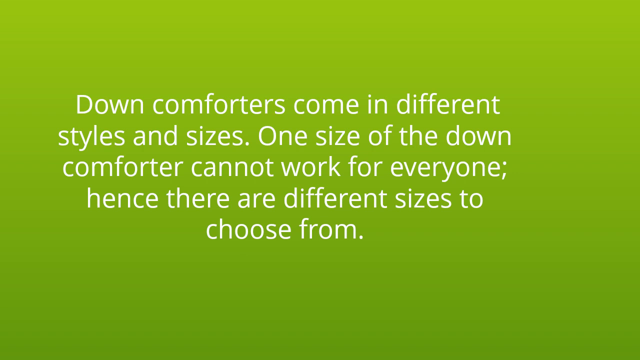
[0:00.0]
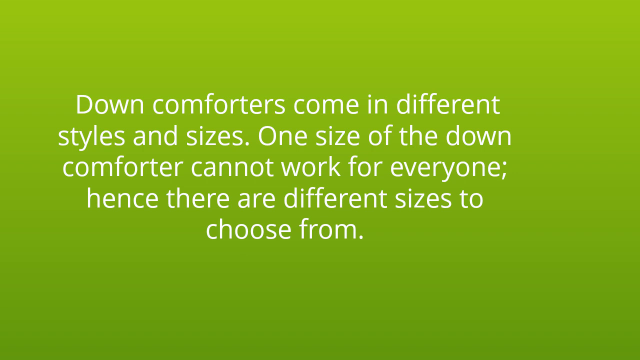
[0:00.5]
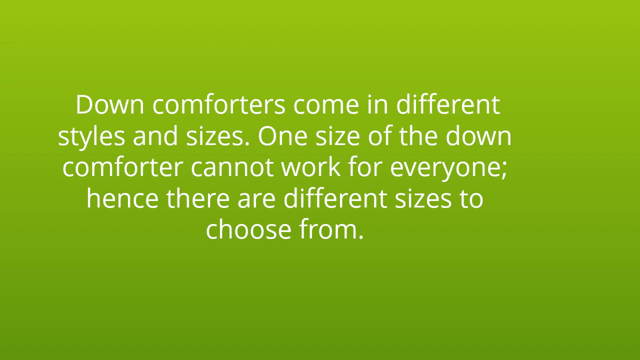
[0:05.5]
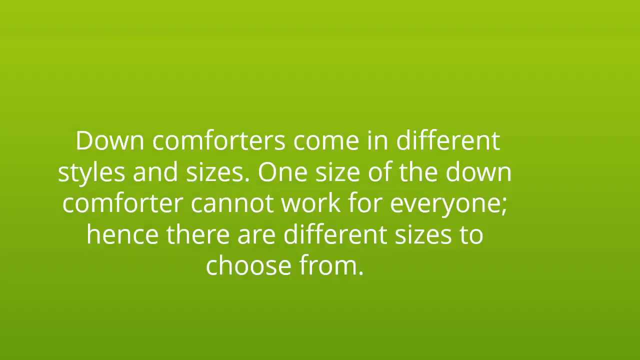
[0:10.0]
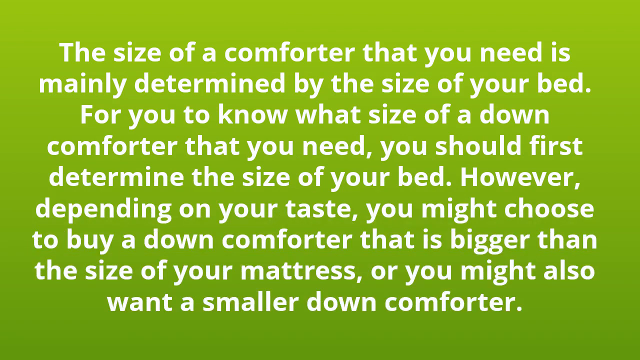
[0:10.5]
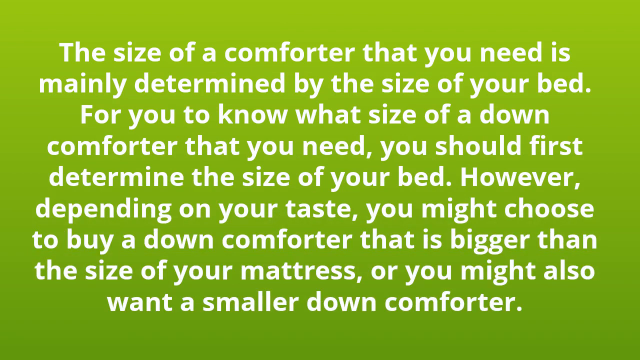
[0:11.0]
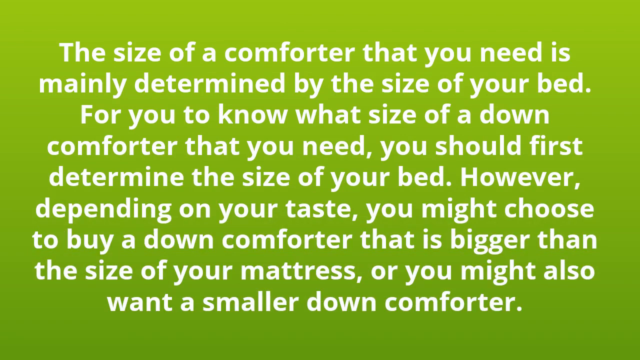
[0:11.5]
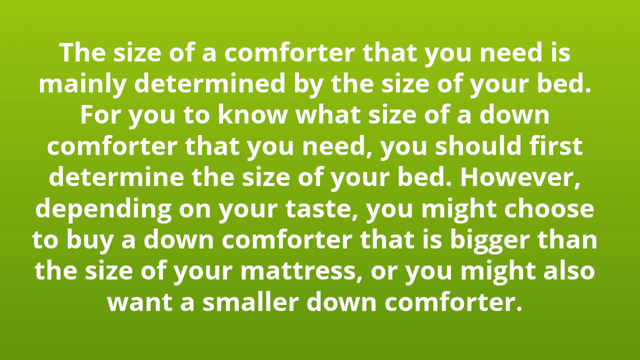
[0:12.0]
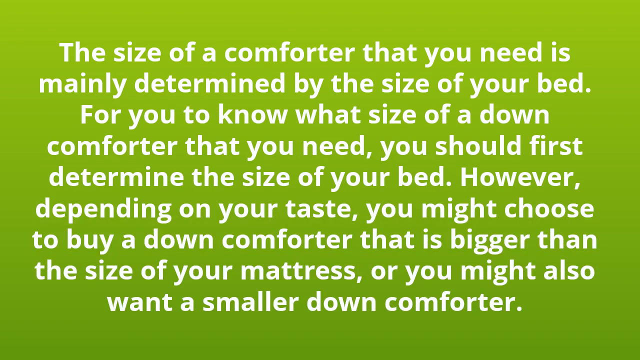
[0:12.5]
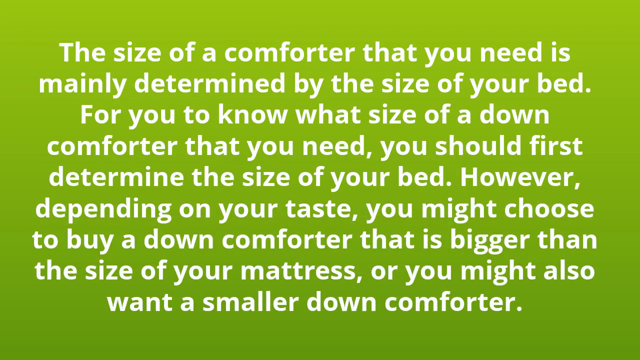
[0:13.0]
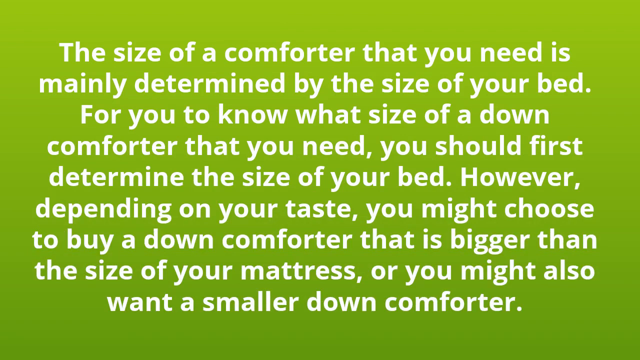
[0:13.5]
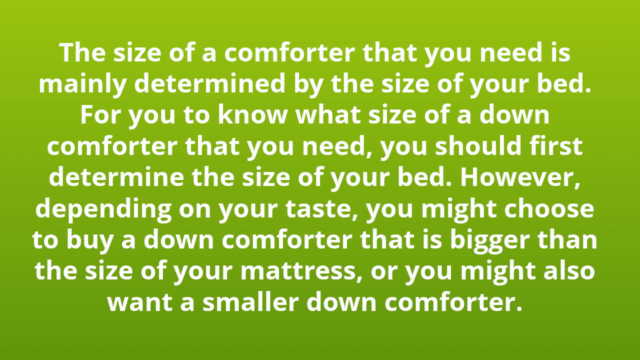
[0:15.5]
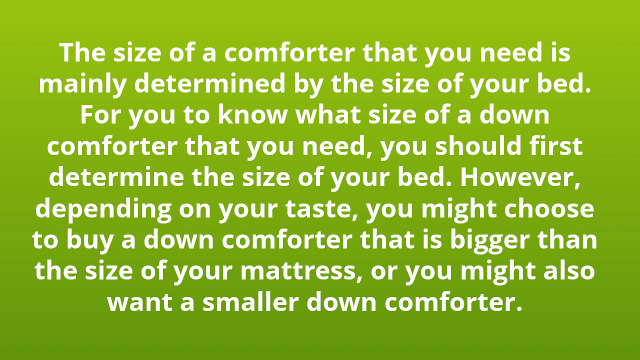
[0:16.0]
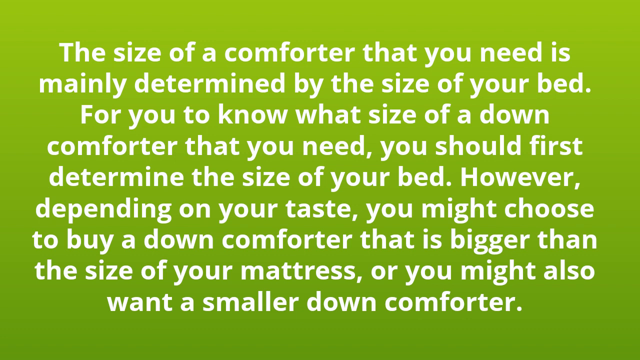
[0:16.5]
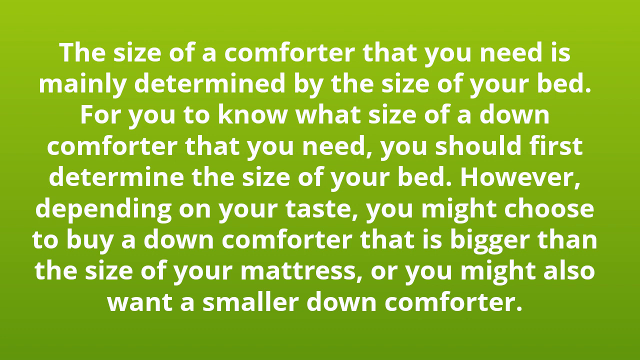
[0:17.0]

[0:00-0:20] An ad appears with a green background and white letters; the green is a kind of lime-ish color. The words are centered in the middle of the screen, with no pictures or anything else on the slide. The text reads: "Down comforters come in different styles and sizes. One size of the down comforter cannot work for everyone. Hence, there are different sizes to choose from." The slide then changes, seemingly peeling down from the top, to a second slide that reads: "The size of the comforter that you need is mainly determined by the size of your bed. For you to know what size of a down comforter that you need, you should first determine the size of your bed. However, depending on your taste, you might choose to buy a down comforter that is bigger than the size of your mattress, or you might also want a smaller down comforter."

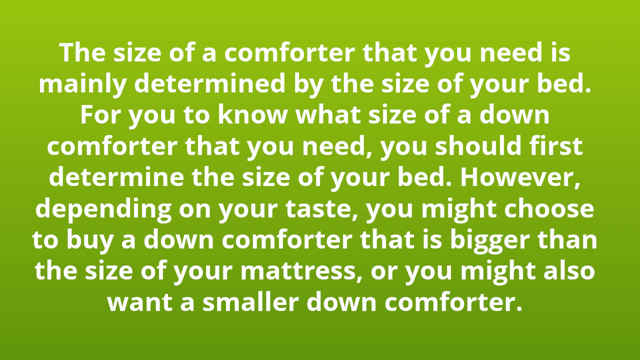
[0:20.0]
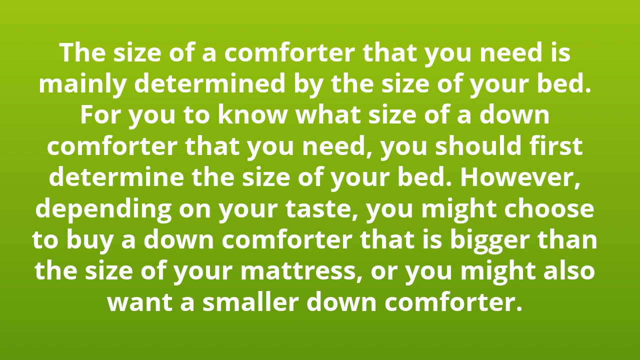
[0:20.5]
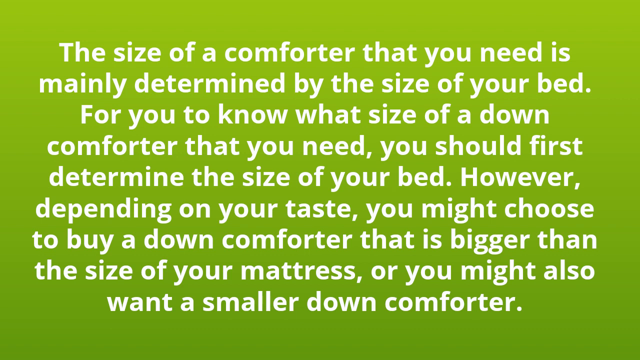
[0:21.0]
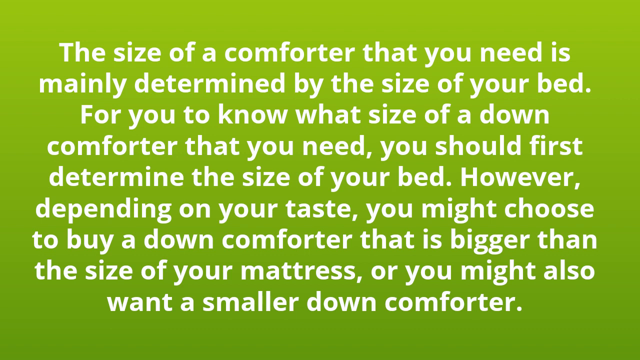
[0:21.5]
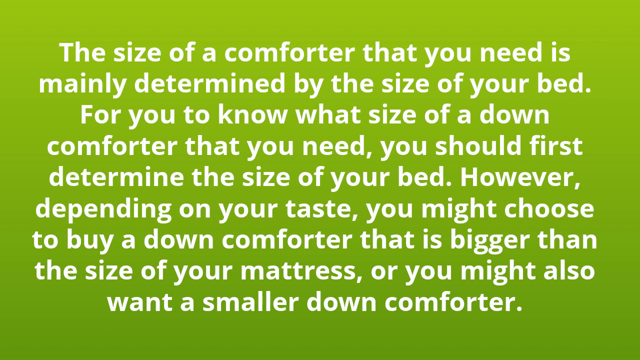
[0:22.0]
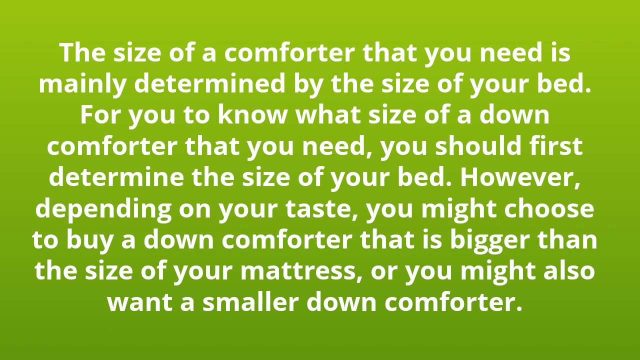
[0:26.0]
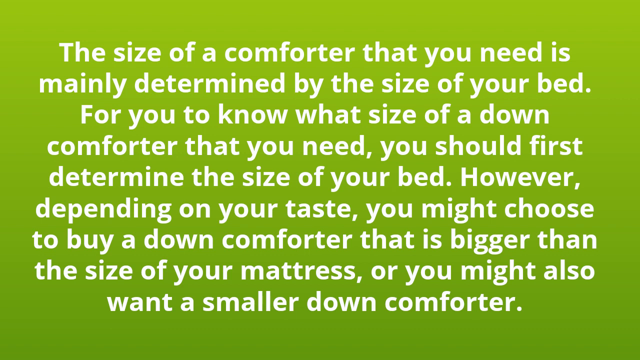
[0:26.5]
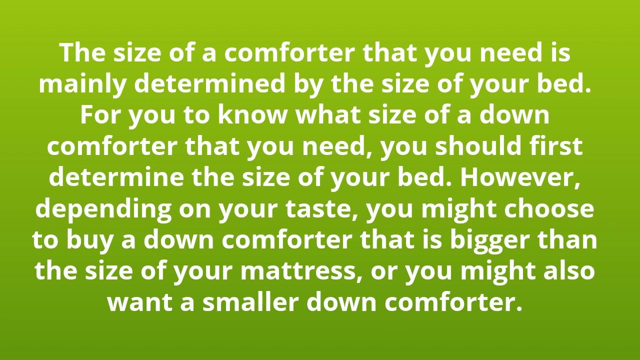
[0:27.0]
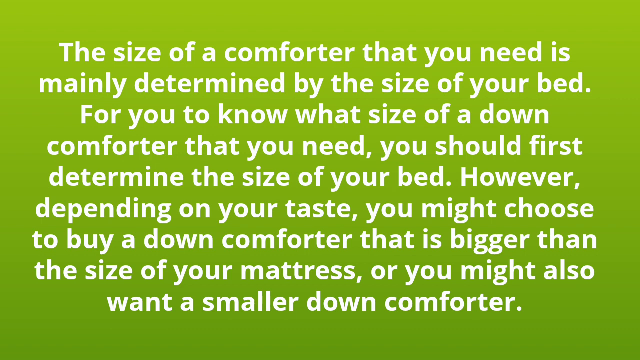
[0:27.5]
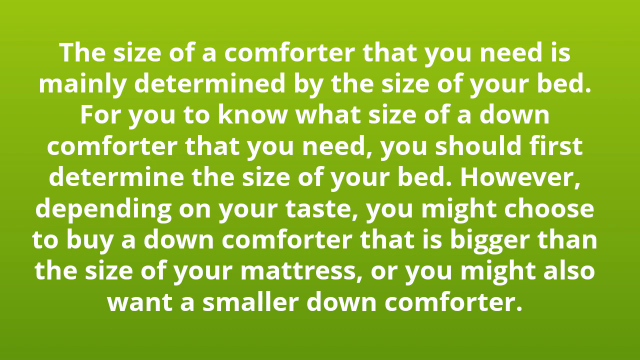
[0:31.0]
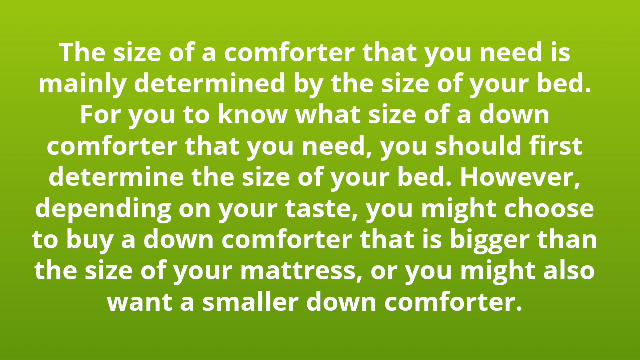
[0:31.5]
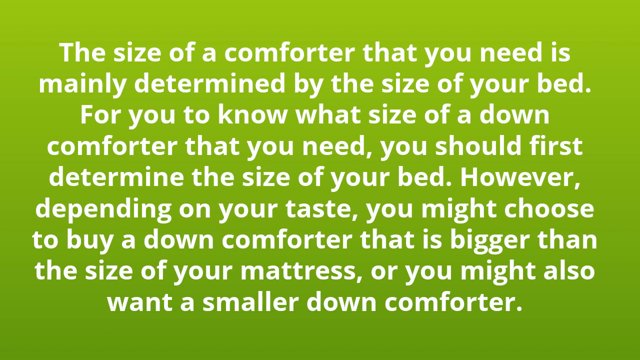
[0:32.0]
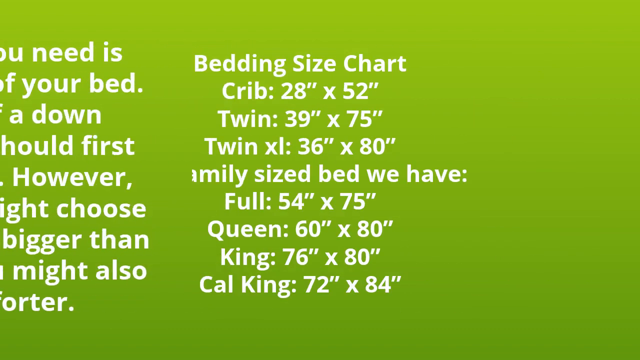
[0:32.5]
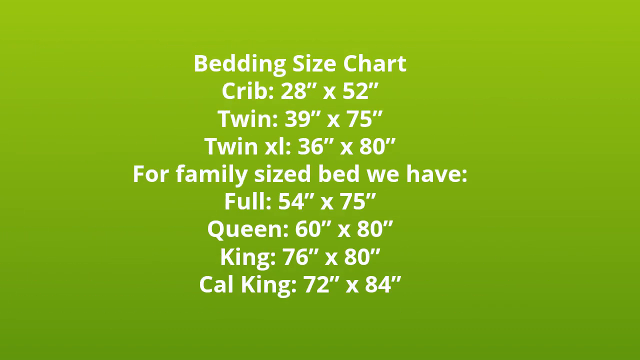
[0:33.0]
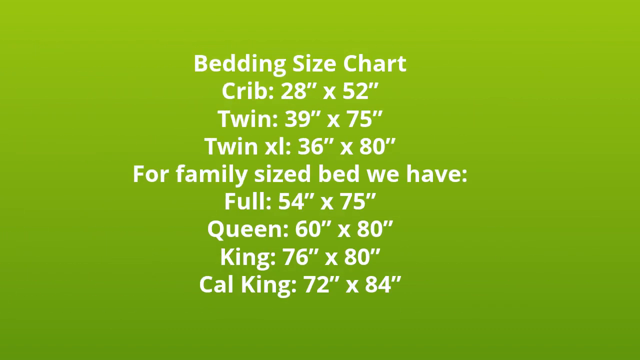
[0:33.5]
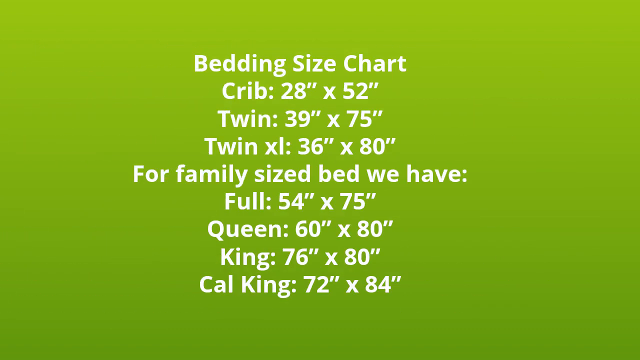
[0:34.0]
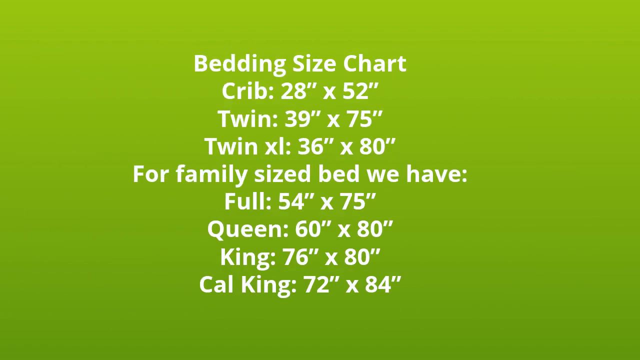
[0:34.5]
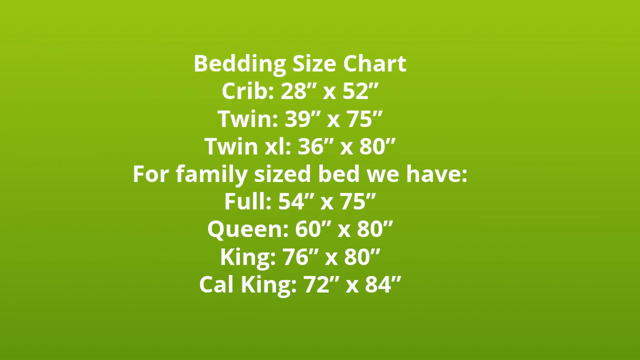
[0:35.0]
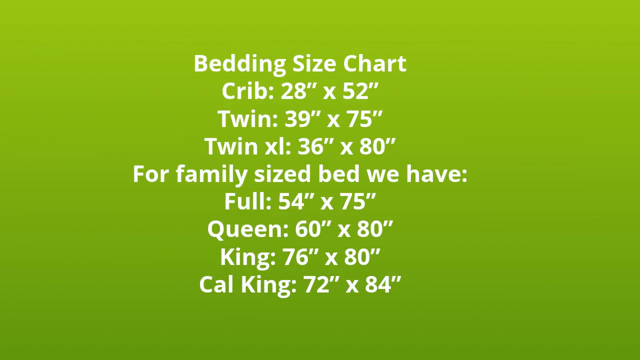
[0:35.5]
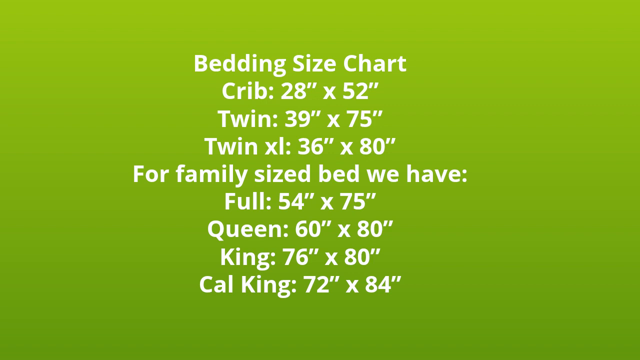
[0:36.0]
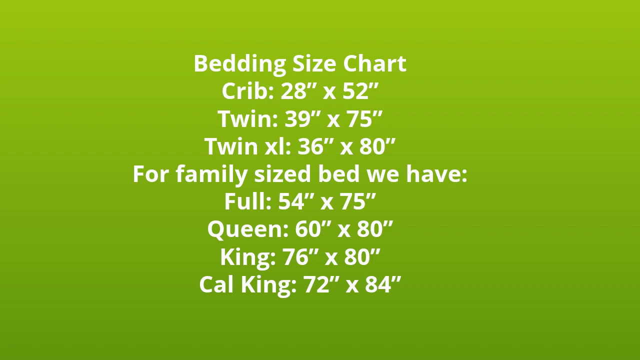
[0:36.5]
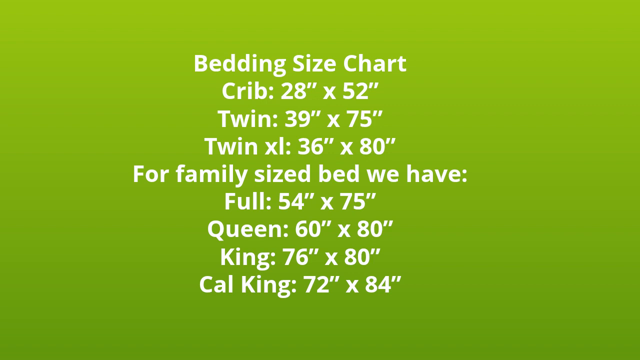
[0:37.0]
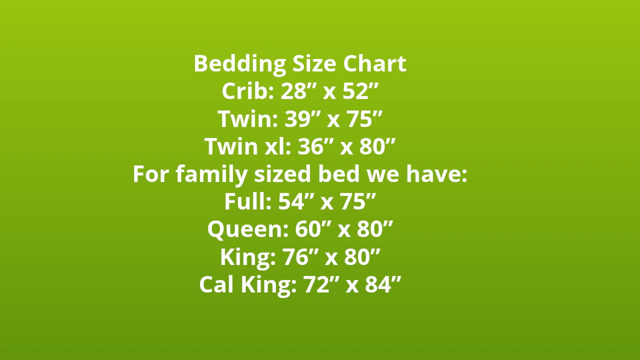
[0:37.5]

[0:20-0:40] The ad for a down comforter has no title; its slides are green with white words centered in the middle. The current slide reads: "The size of the comforter that you need is mainly determined by the size of your bed. For you to know what size of a down comforter that you need, you should determine the size of your bed. However, depending on your taste, you might choose to buy a down comforter that is bigger than the size of your mattress, or you might want a smaller down comforter." The slide then changes sideways, moving from right to left, to a completely centered slide titled "Bedding size chart" listing: "Crib 28 inches by 52 inches", "Twin 39 inches by 75 inches", "Twin XL 36 by 80", then "For a family-sized bed, we have" "Full 54 times 75", "Queen 60 times 80", "King 76 times 80" and "California King 72 times 84".